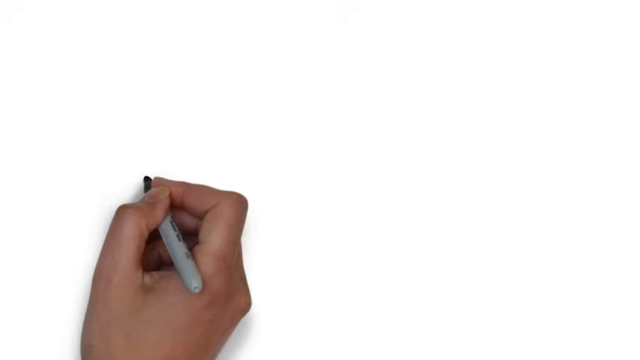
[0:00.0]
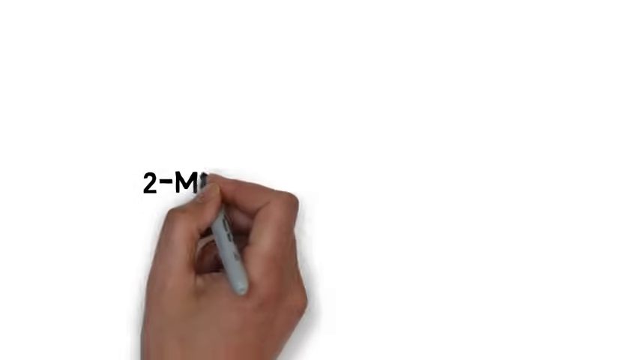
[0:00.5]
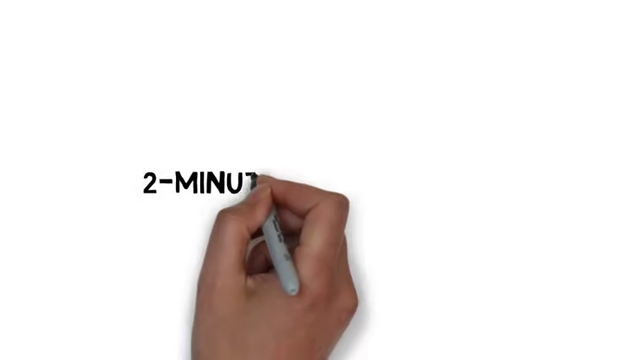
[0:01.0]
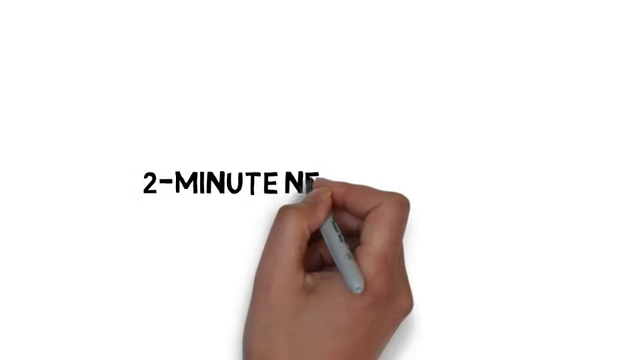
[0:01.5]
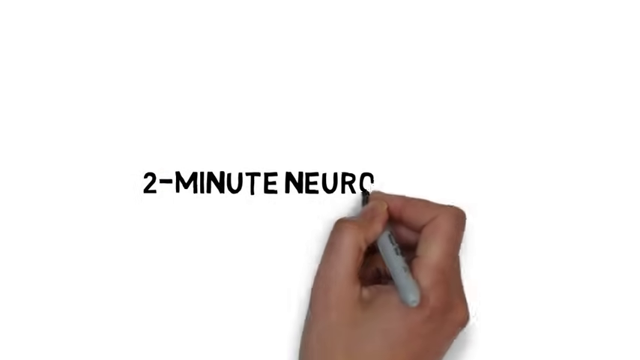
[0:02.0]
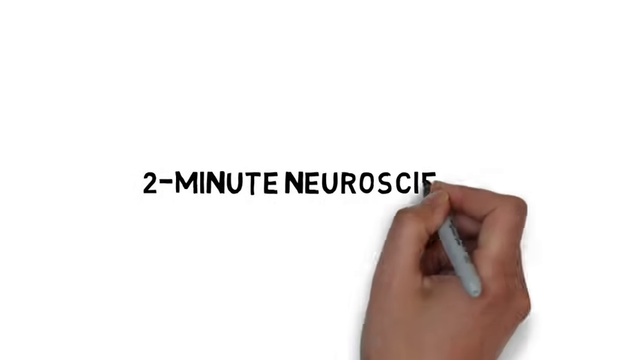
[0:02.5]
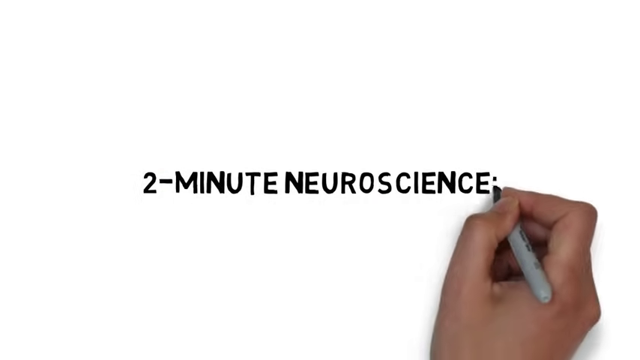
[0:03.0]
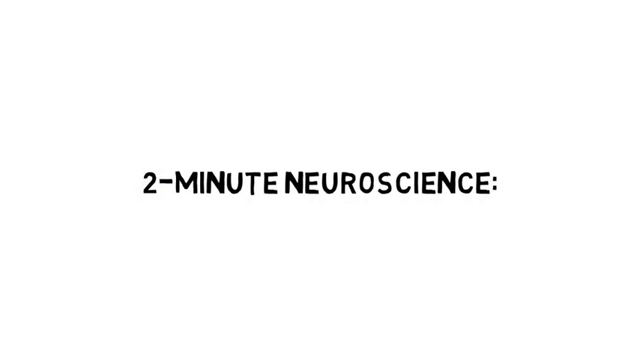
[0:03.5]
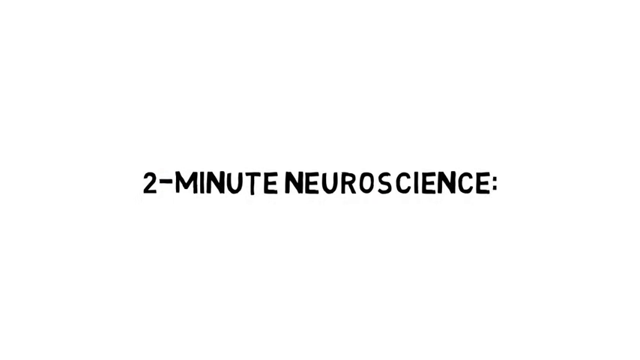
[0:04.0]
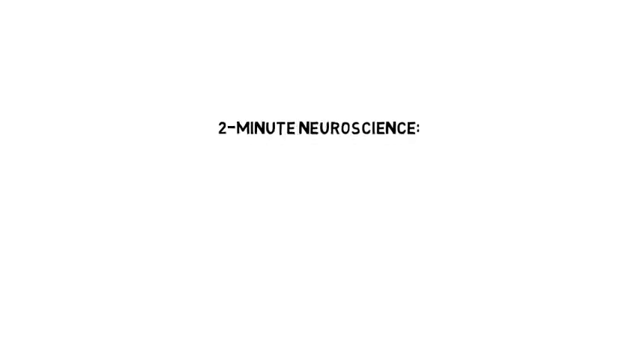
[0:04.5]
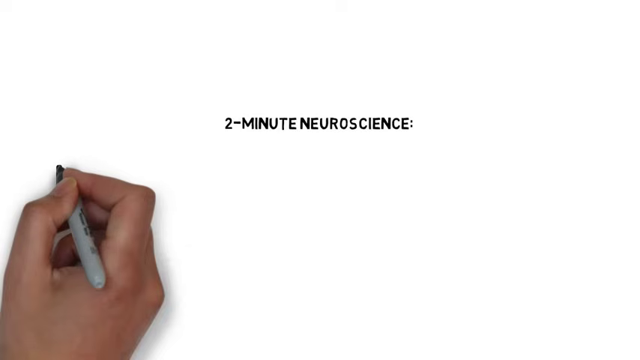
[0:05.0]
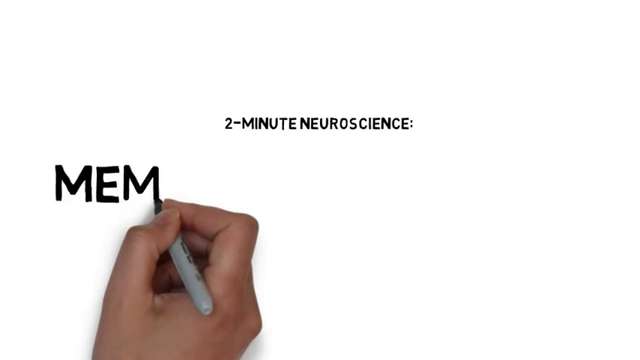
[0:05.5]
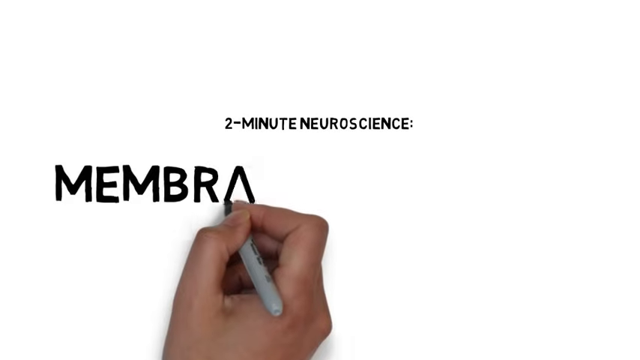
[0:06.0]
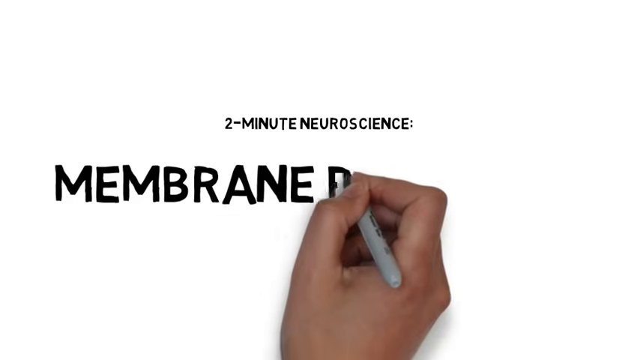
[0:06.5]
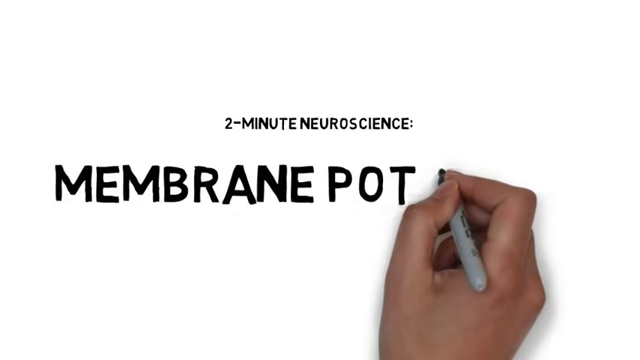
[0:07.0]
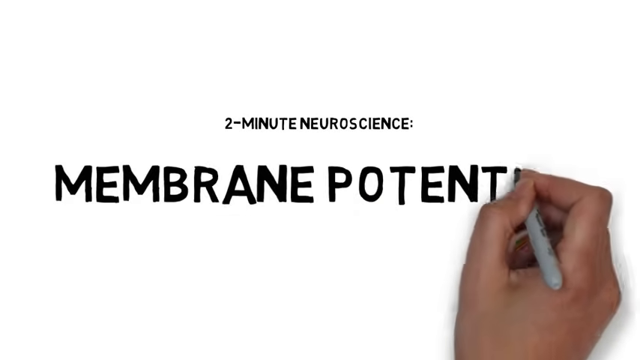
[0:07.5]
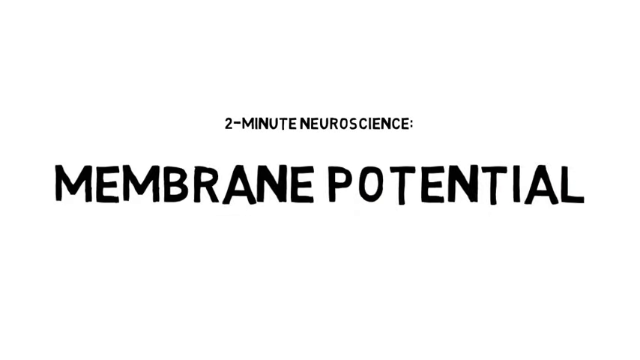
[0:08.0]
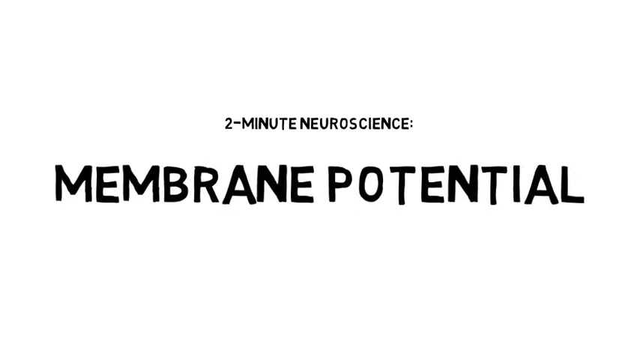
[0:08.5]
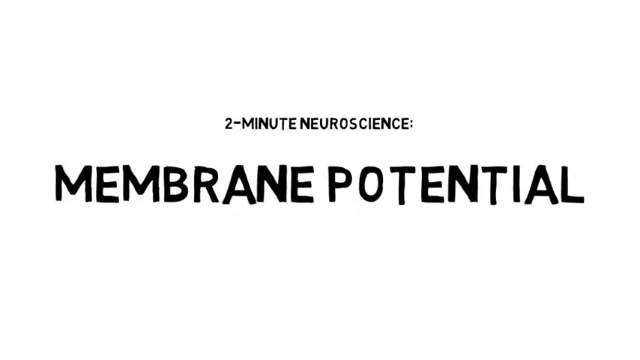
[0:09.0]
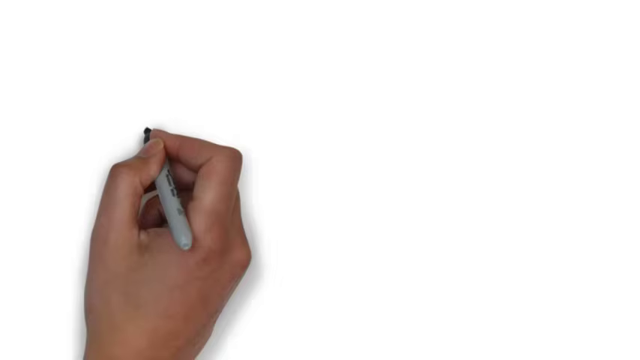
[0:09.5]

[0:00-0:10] The video begins with a hand holding a pen, writing on a white screen: "two minute neuroscience" followed by a colon. That text is made smaller, and then the words "membrane potential" are written in a larger font. The hand then starts to write again, drawing something that looks like a horizontal rendering of a double helix, though this is not certain.